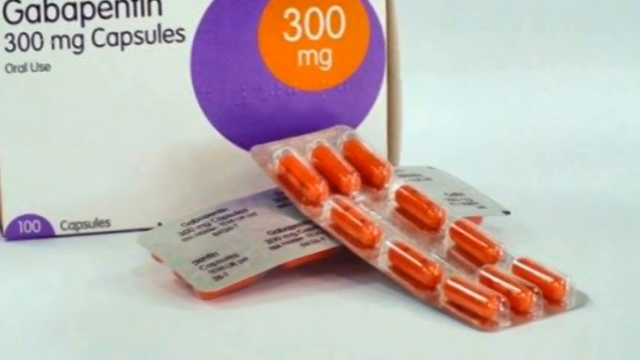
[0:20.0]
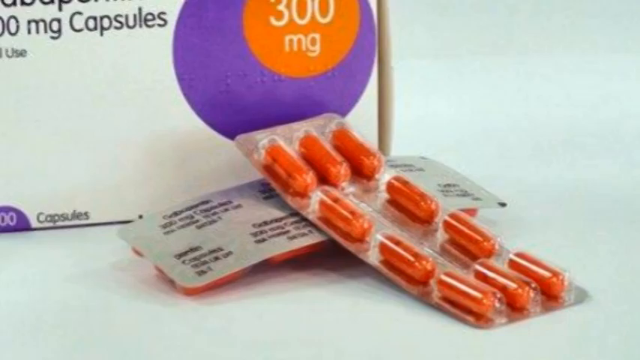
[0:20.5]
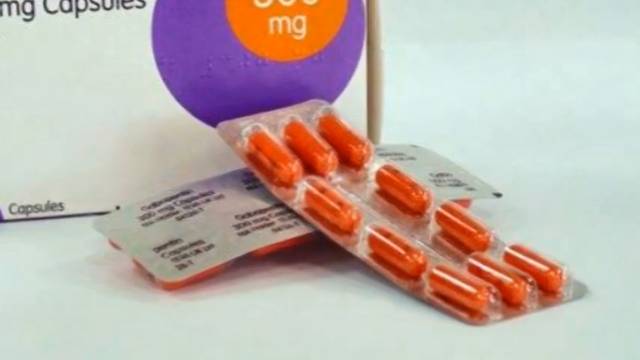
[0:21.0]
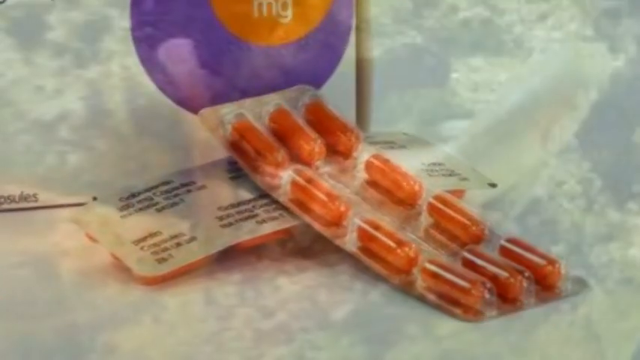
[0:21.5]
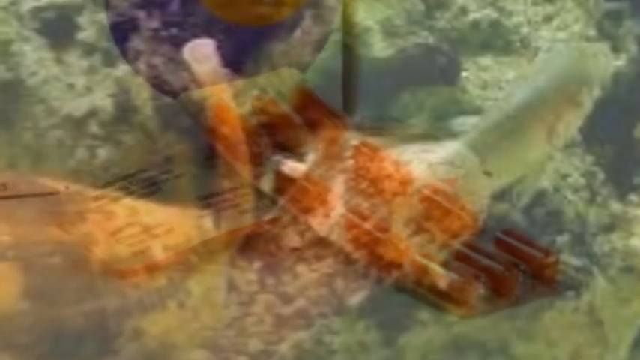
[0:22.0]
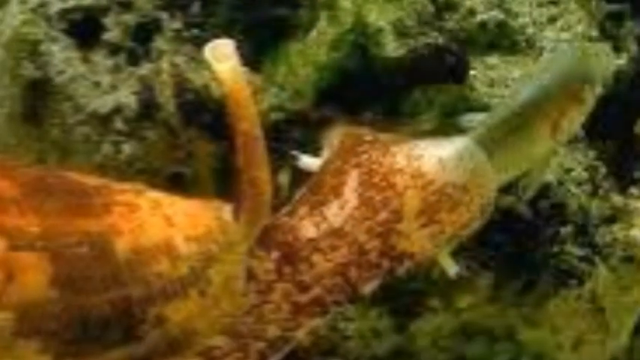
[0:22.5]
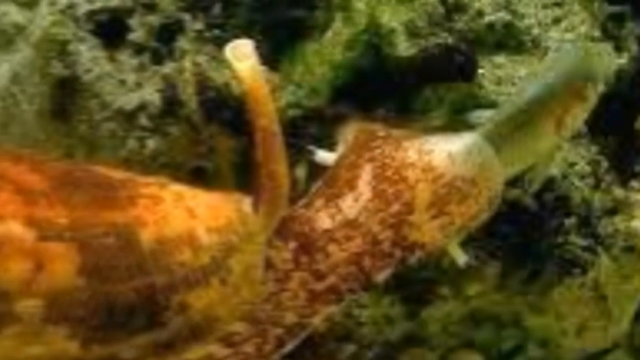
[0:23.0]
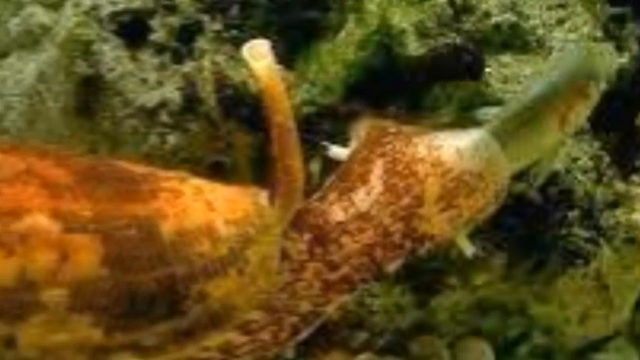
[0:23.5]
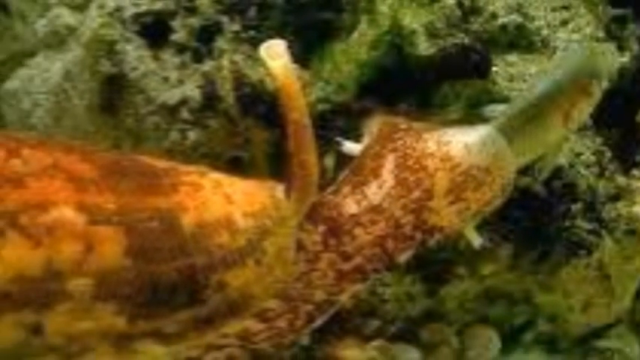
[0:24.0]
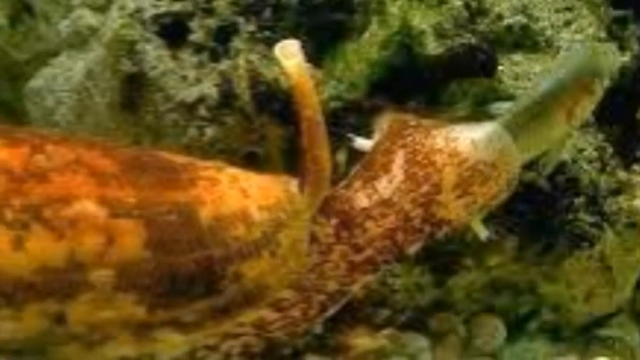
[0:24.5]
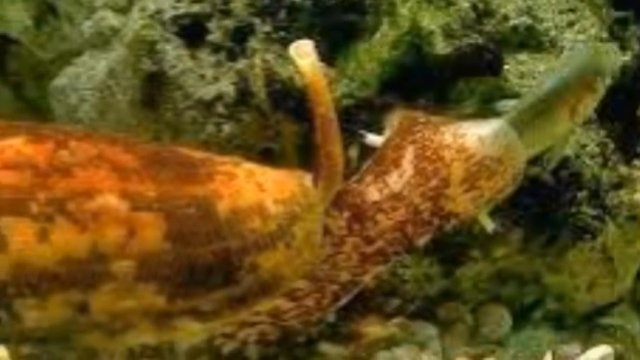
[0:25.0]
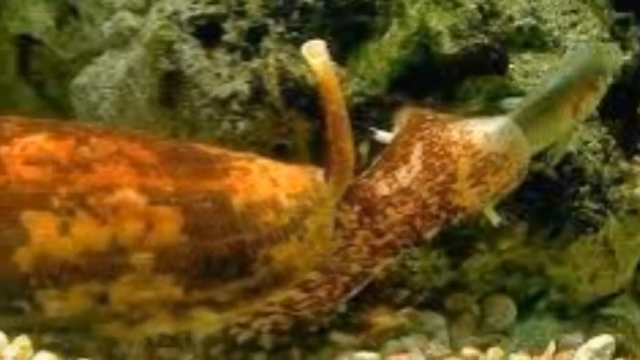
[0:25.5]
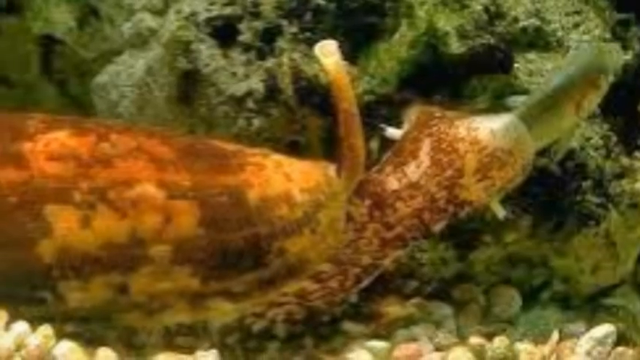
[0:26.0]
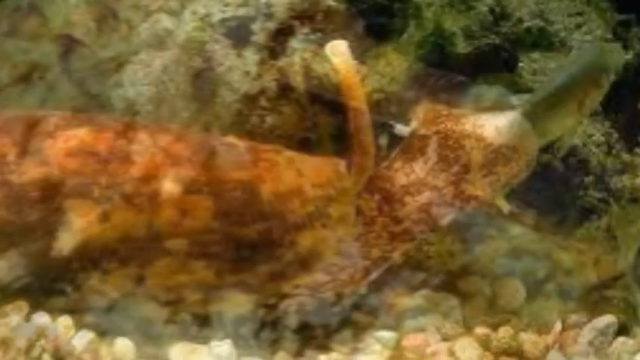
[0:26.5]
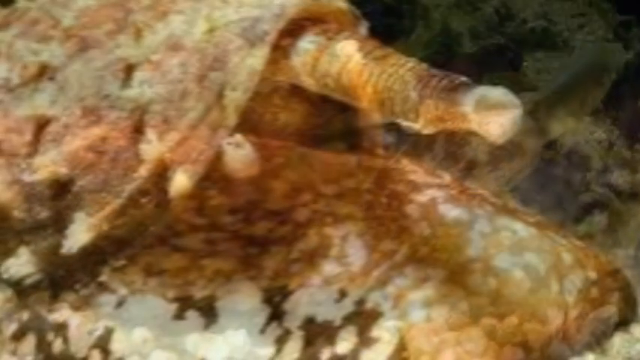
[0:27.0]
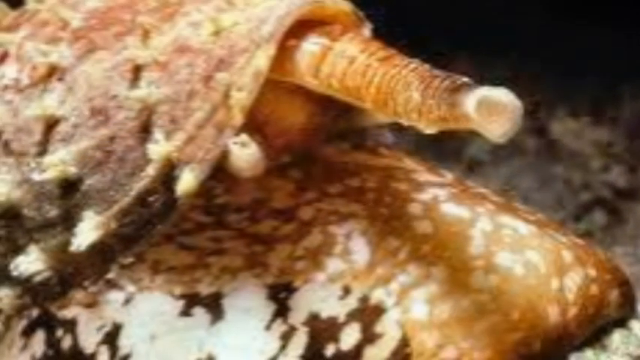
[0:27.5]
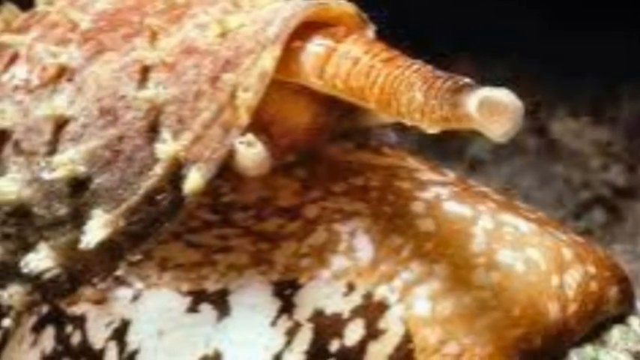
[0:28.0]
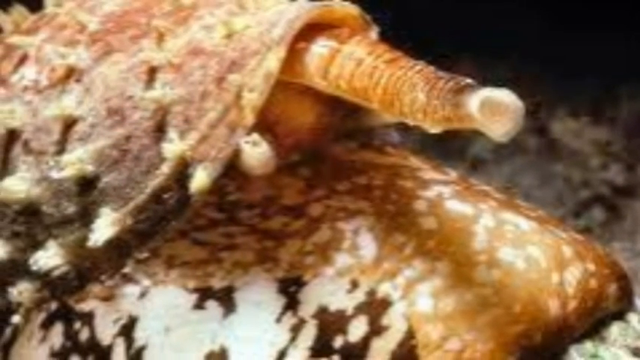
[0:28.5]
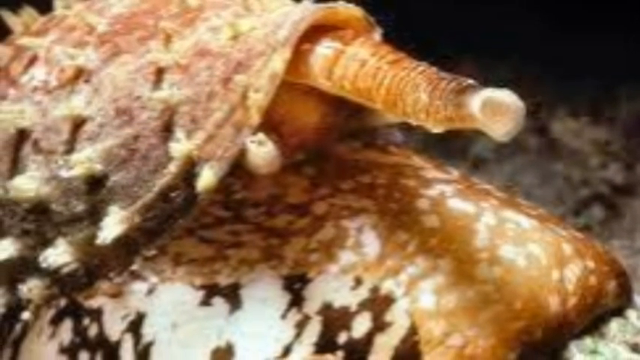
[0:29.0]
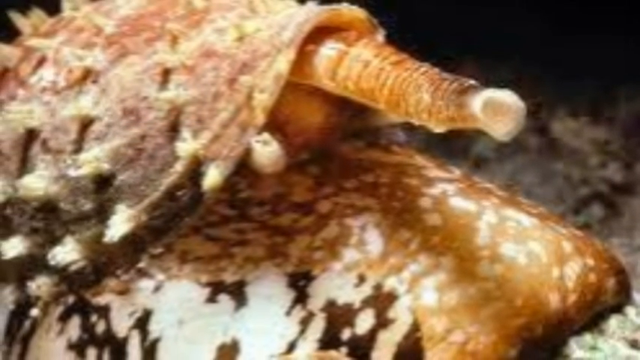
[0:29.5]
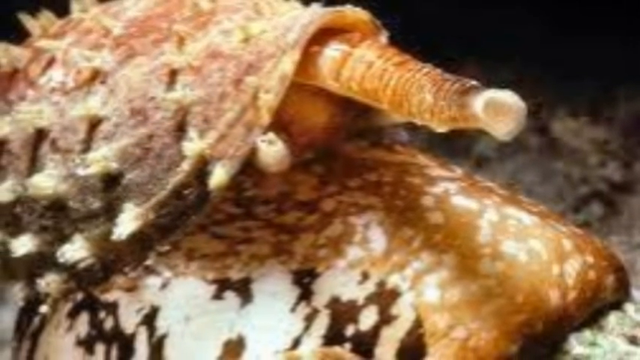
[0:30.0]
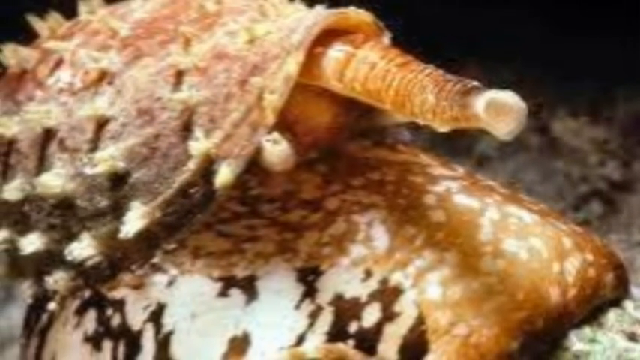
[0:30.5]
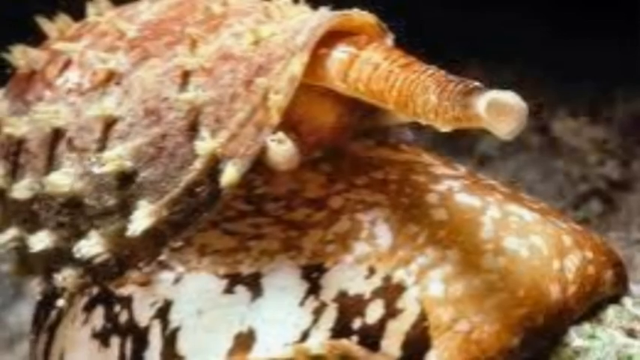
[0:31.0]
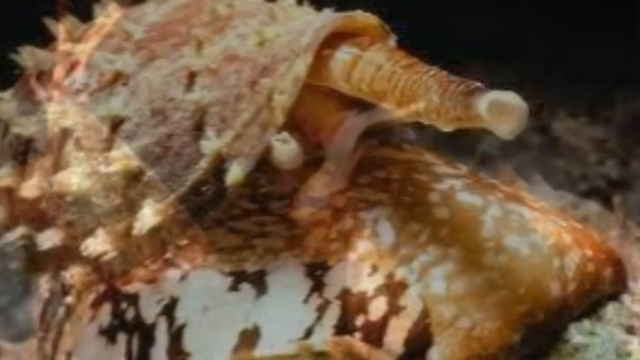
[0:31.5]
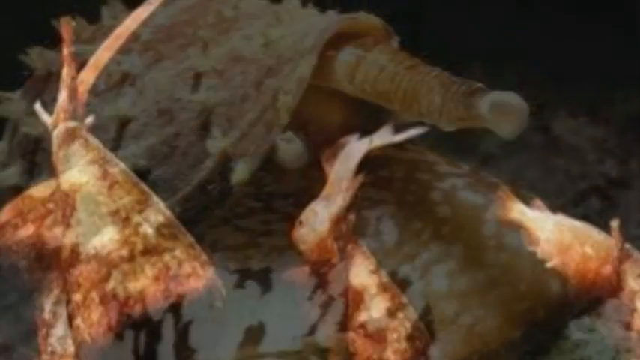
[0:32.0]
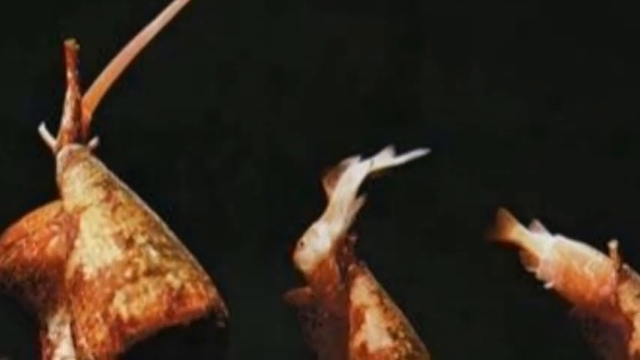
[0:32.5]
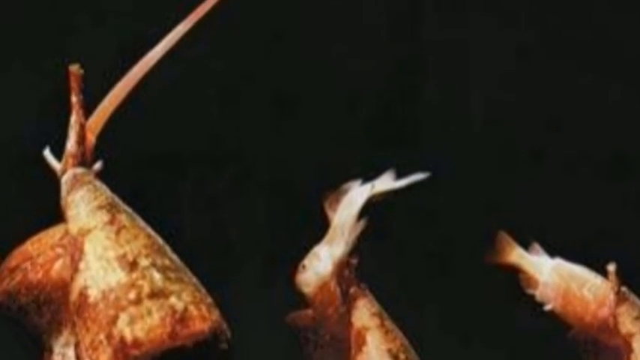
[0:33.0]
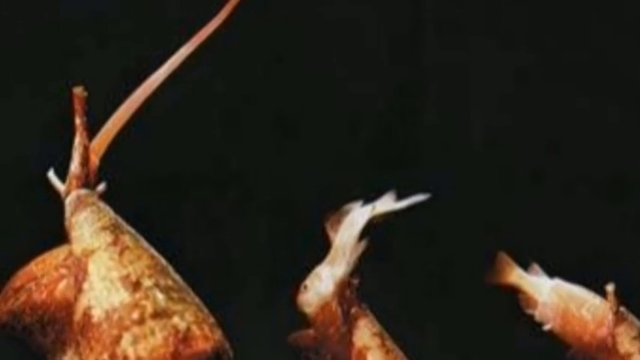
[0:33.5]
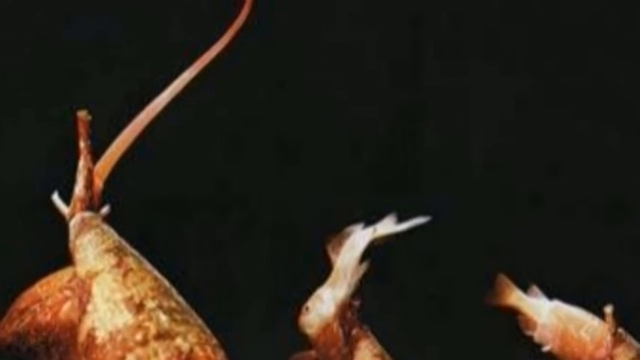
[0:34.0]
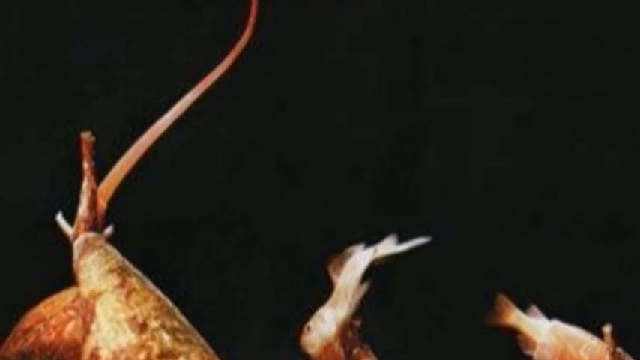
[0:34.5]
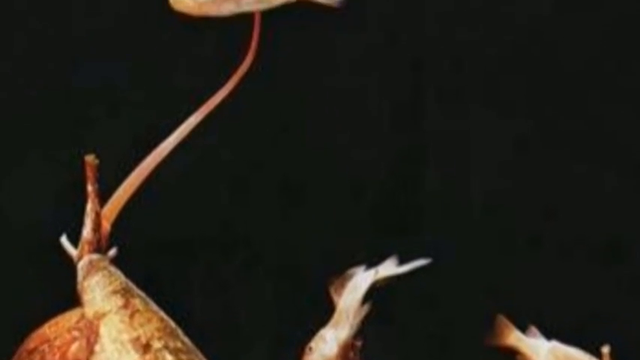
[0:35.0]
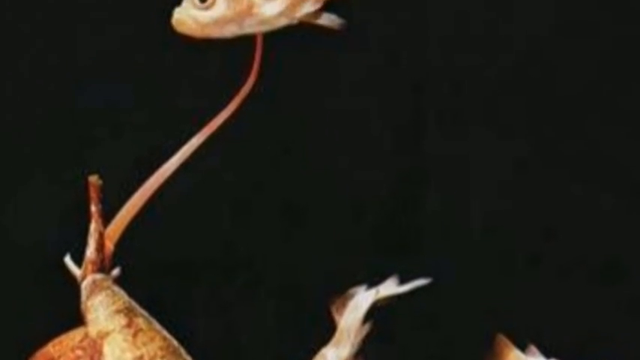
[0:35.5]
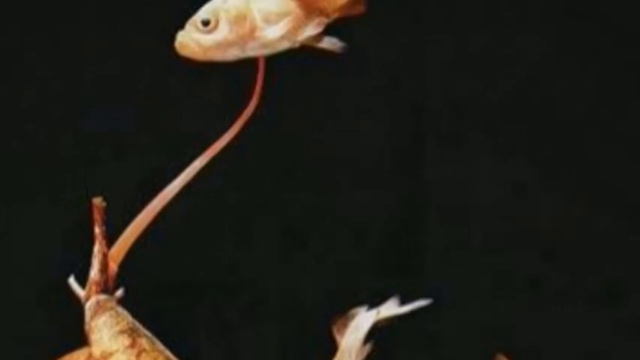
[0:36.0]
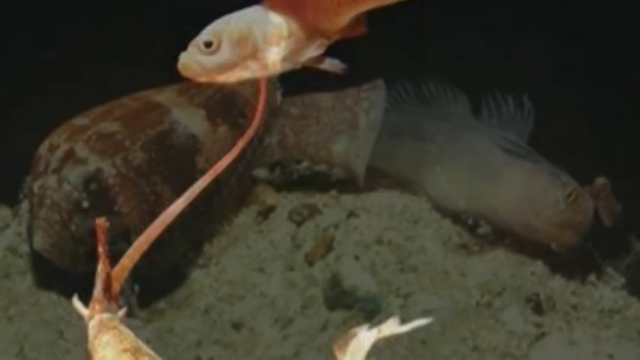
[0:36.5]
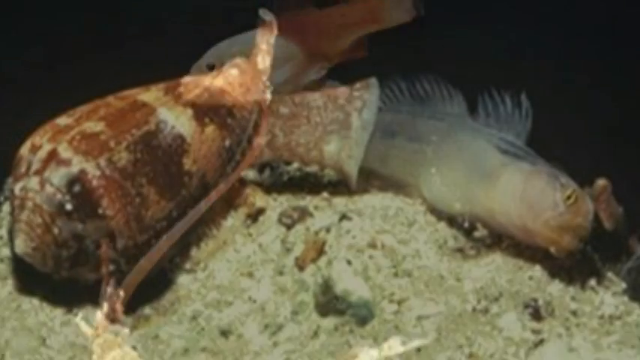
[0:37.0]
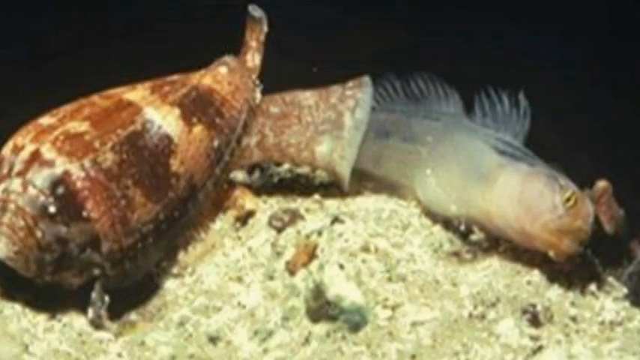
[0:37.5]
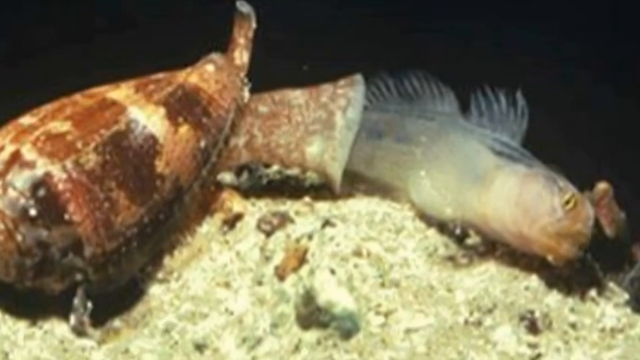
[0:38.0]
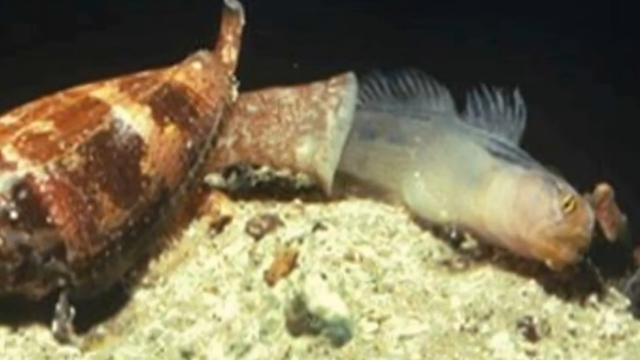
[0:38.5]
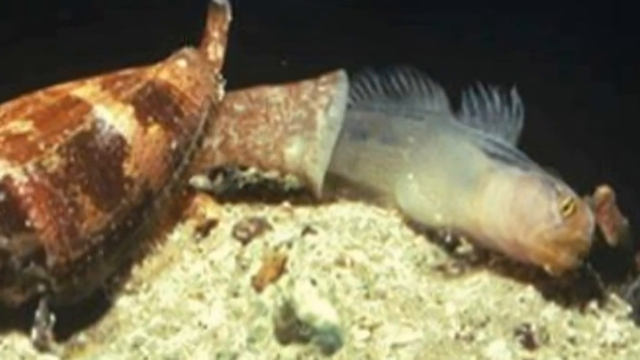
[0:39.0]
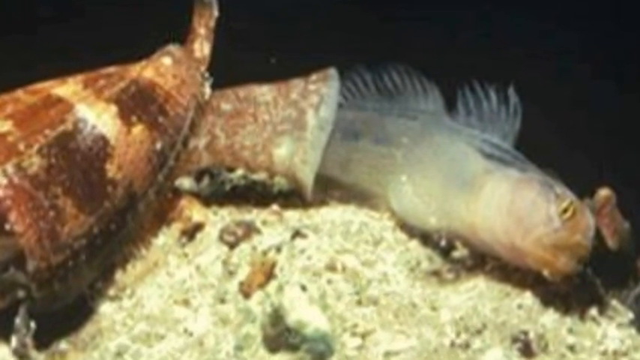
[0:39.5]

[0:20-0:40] The camera zooms into the gabapentin capsules, then fades to what appears to be a photo of the sea creature with its shell. Its proboscis protrudes from under the shell, and another tentacle appears to be trying to catch a fish by stunning it with venom. In another shot, a fish looks like it has succumbed to the venom and is becoming a meal for the shell creature. The creature appears to be in a semi-cylindrical or conical shell that looks like it has a brown and tan camouflage. It is at the bottom of an aquarium or the sea, on top of grainy white sand. The caught fish seems to be paralyzed and is on its side, and the creature appears ready to eat it. The fish is semi-translucent, doesn't seem very bony, and seems very small and semi-transparent.